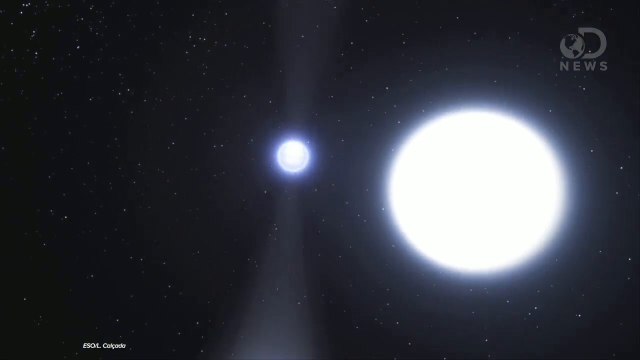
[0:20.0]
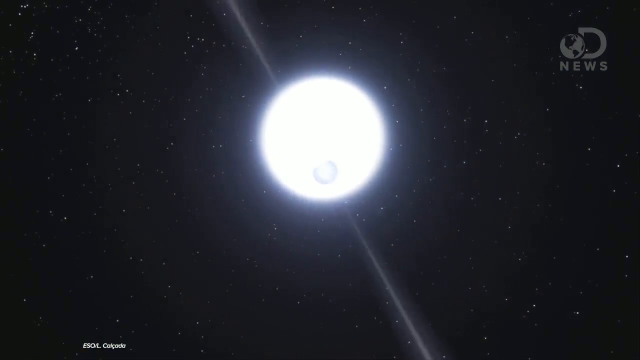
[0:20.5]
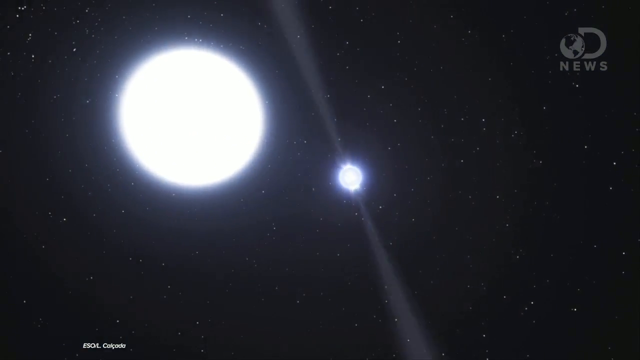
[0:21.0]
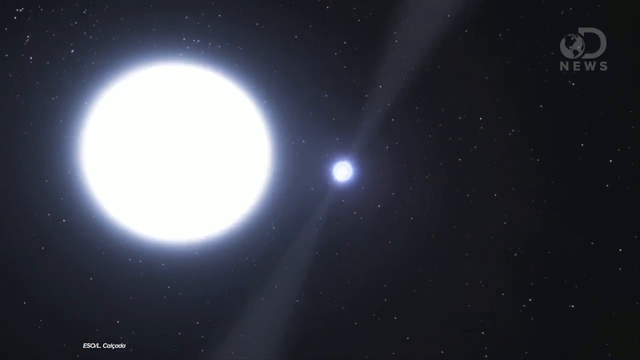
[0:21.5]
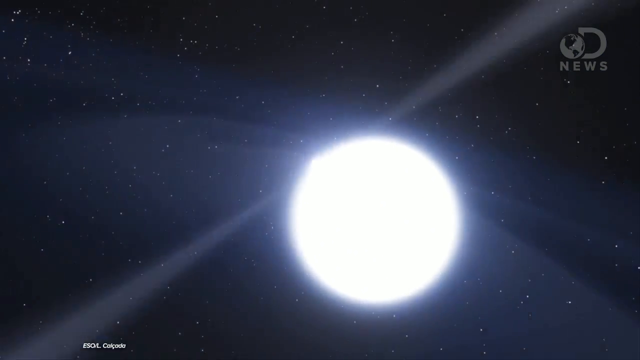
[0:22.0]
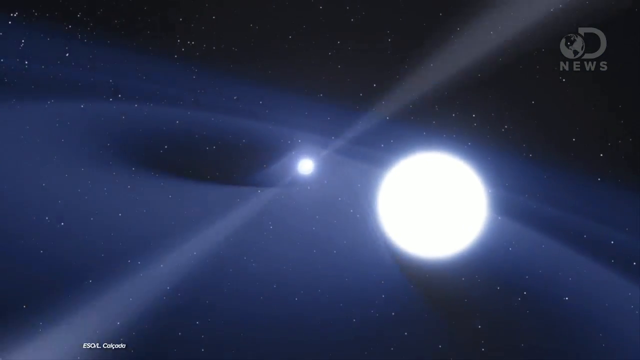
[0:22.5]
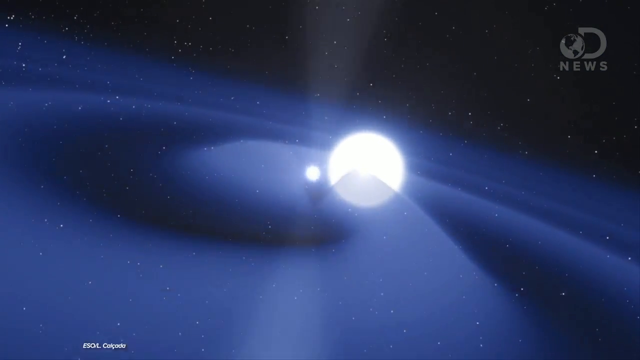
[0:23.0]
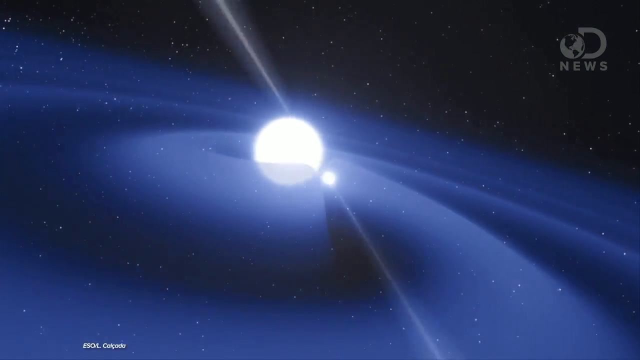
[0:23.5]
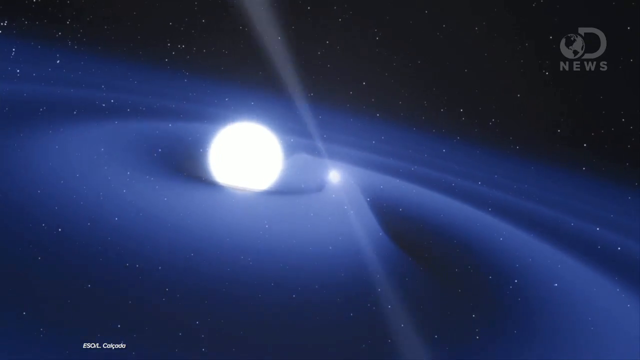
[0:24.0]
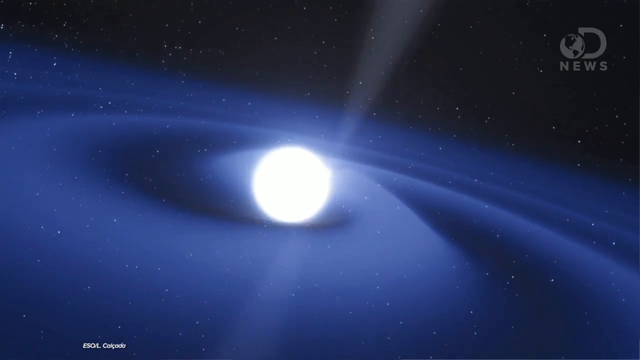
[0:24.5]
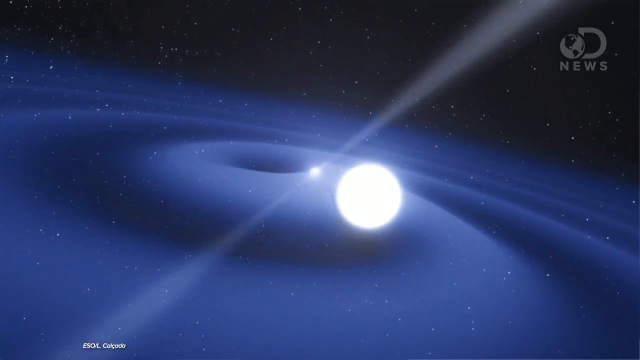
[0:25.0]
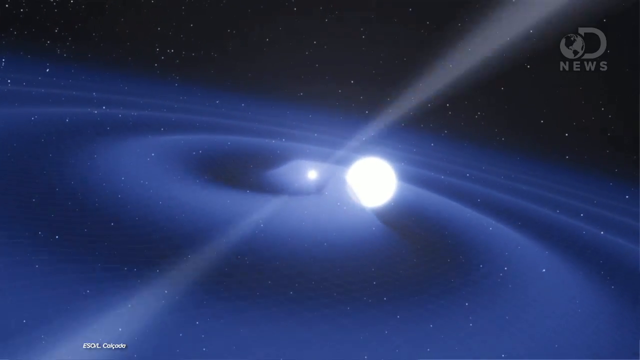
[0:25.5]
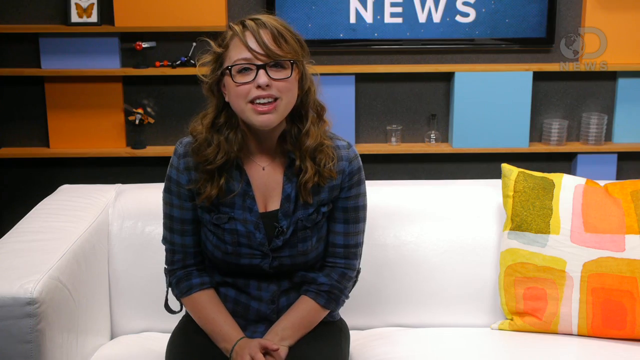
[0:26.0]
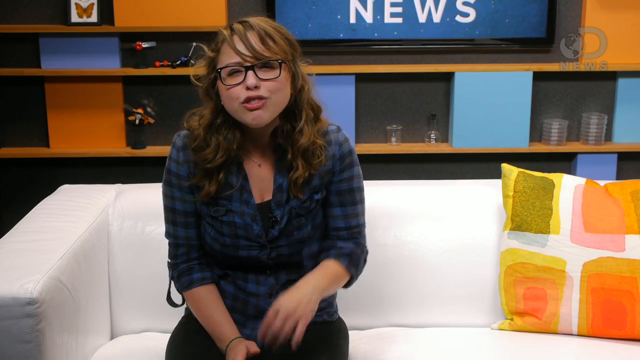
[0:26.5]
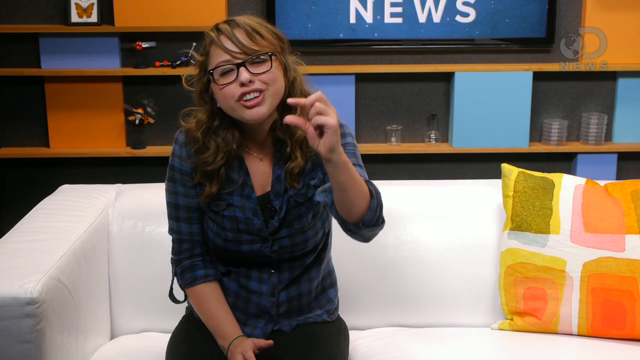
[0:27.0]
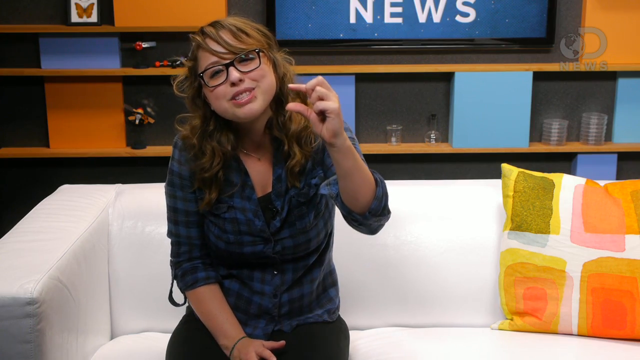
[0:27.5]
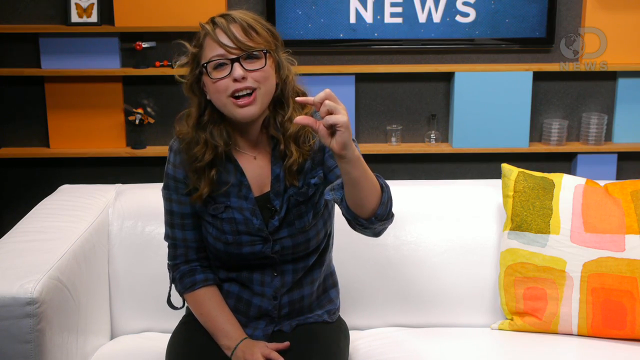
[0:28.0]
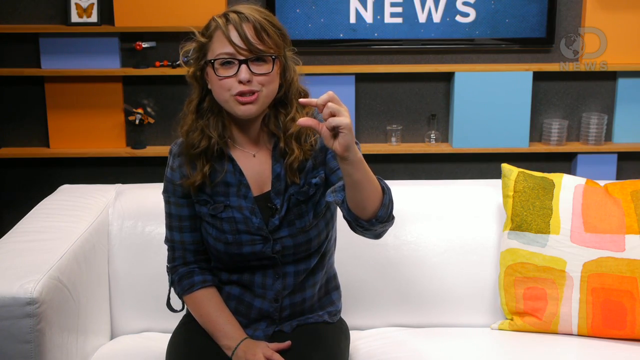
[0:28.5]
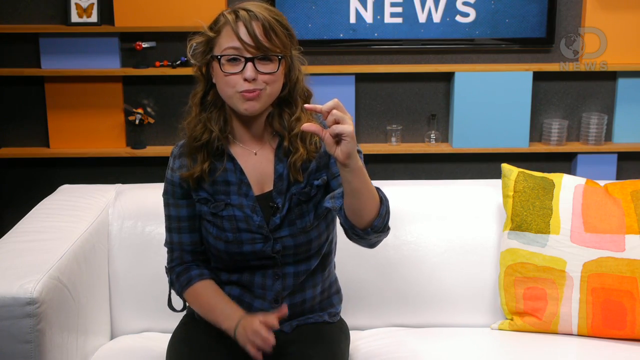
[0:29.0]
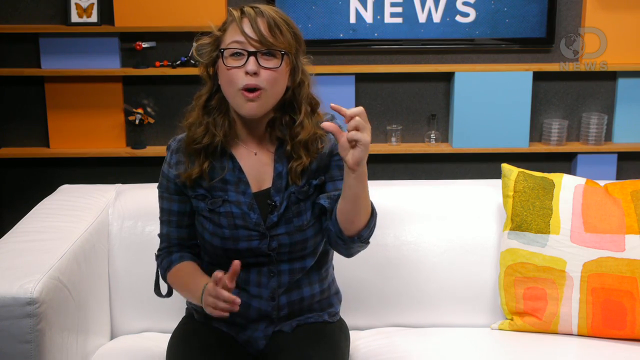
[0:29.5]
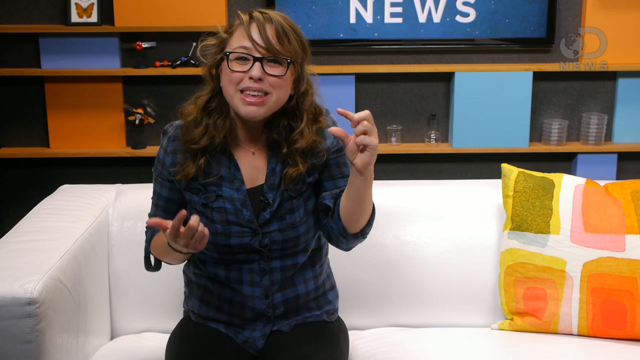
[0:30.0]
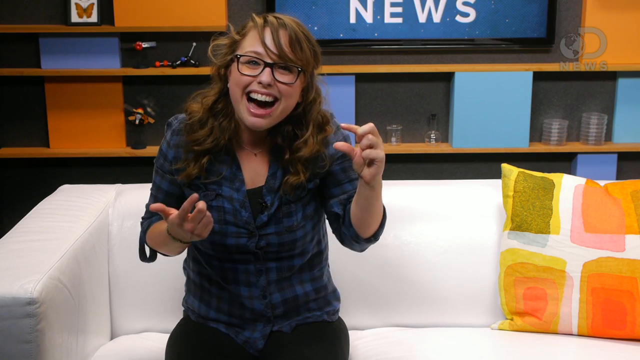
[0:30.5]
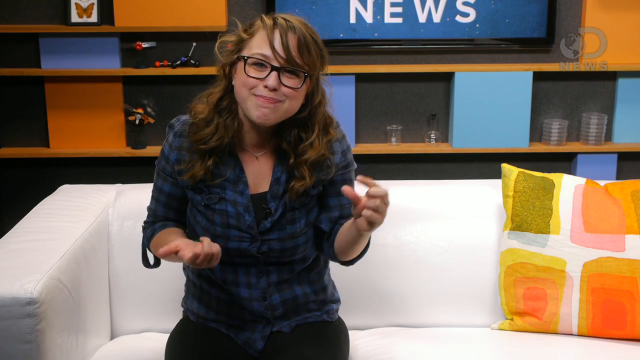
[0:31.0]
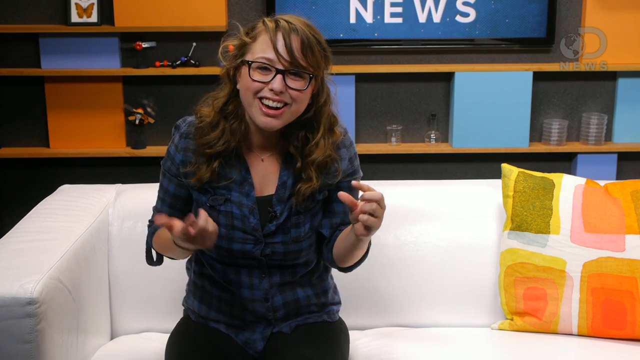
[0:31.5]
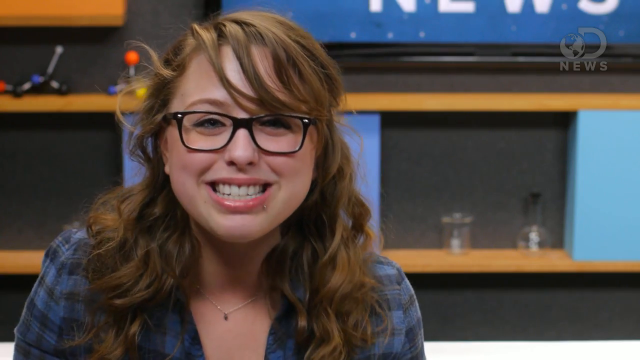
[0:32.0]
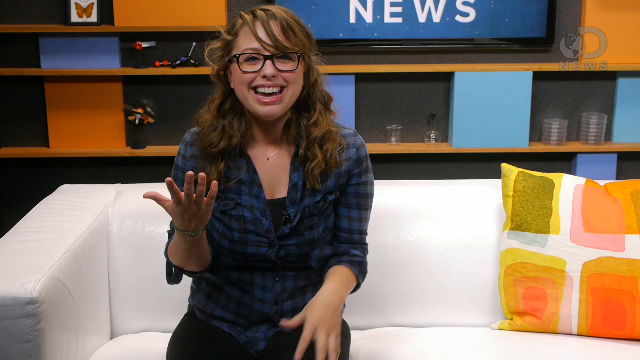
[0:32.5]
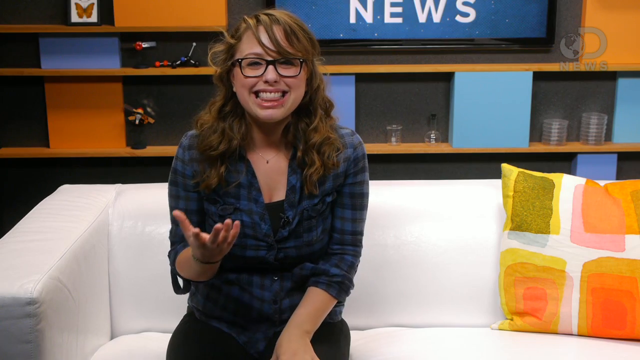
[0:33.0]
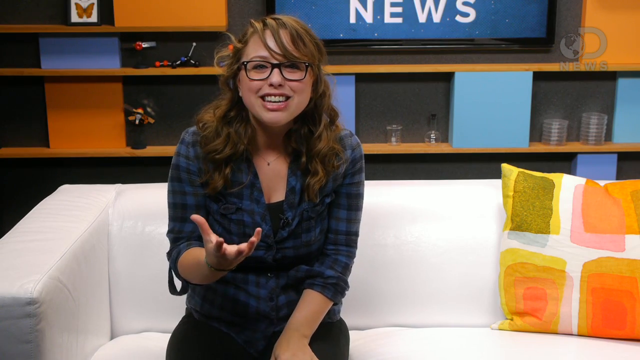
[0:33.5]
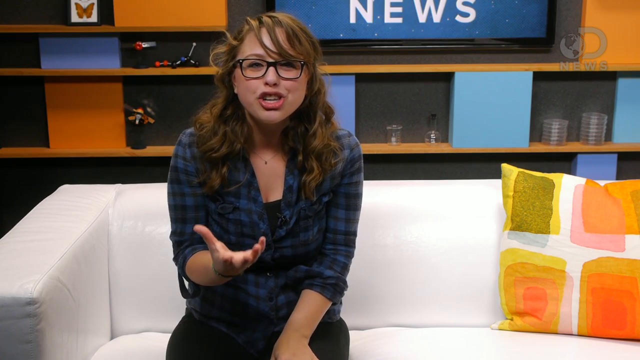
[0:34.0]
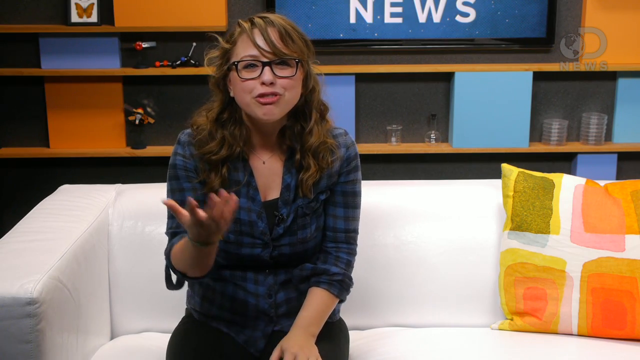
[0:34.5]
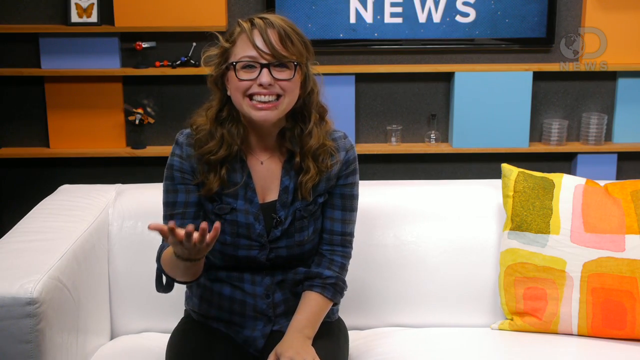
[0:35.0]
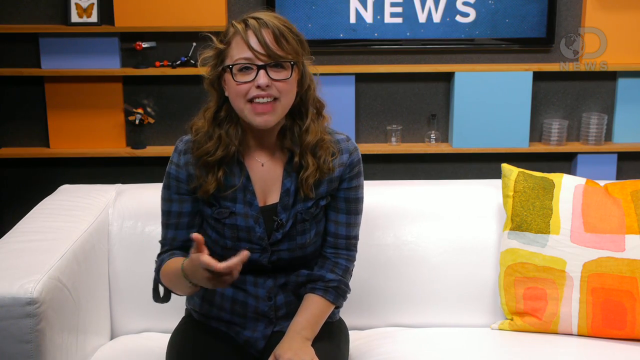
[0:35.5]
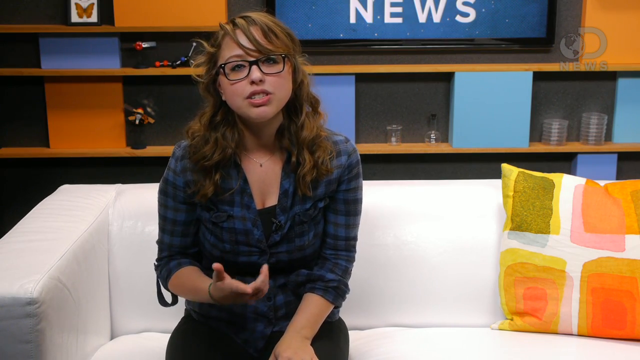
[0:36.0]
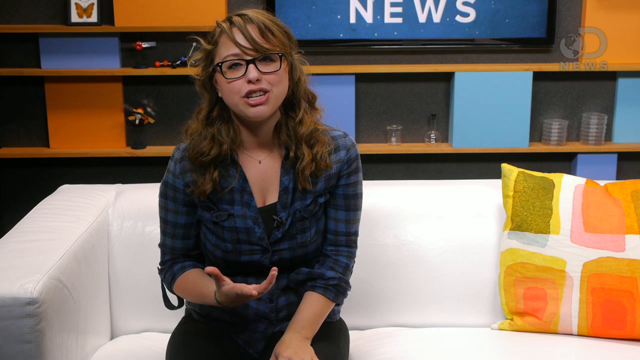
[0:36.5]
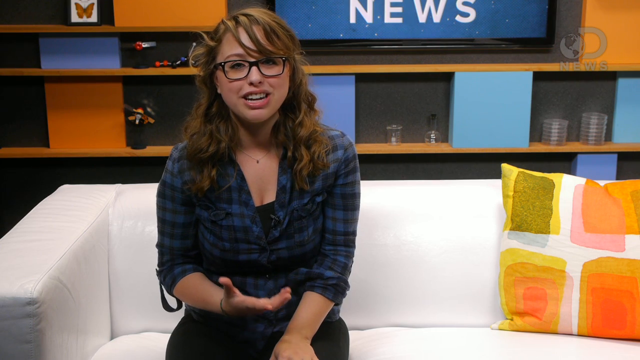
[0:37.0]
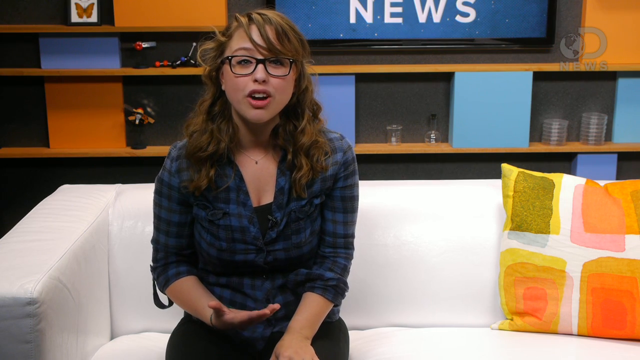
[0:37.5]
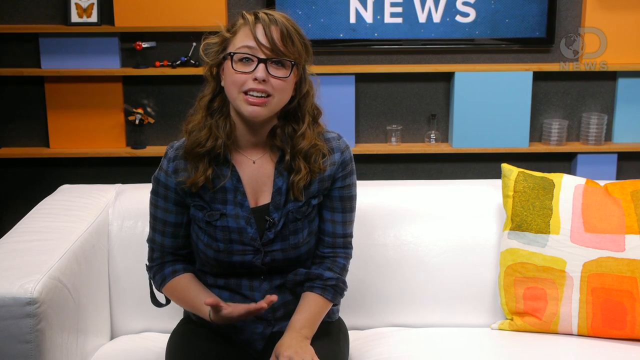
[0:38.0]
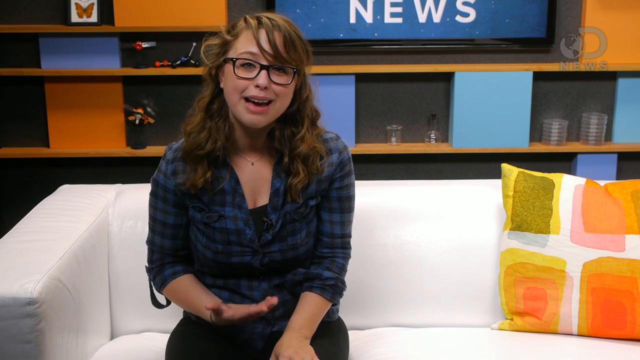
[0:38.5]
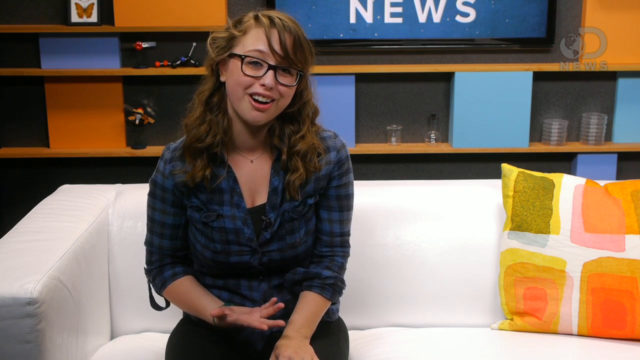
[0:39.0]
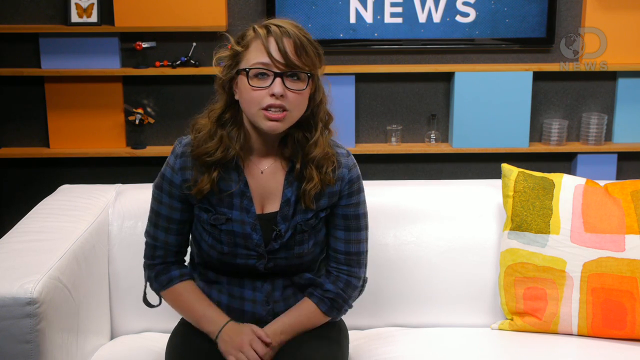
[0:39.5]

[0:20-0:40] Something kind of like a marble goes around a white circle. A woman sits on a couch wearing a blue and navy black checkered shirt, a delicate silver necklace and a bracelet on her arm. As she talks, every once in a while she uses her fingers to show how big something is. Her hair is curly or curled, with a partial bang that covers toward one side of her face. The scene breaks to a background that looks like the universe, with planets spinning around each other. In this dark background a white line quivers back and forth, and white light shines in that area. The woman seems very happy and enthusiastic and smiles as she talks.